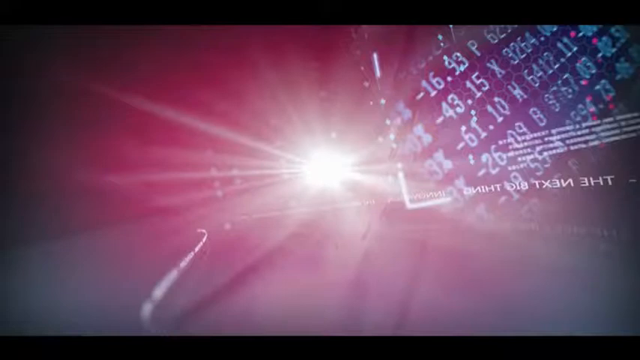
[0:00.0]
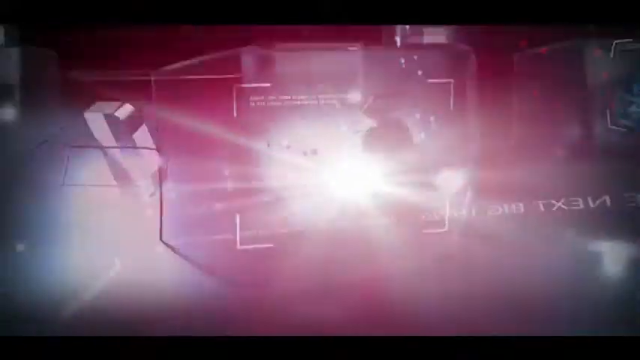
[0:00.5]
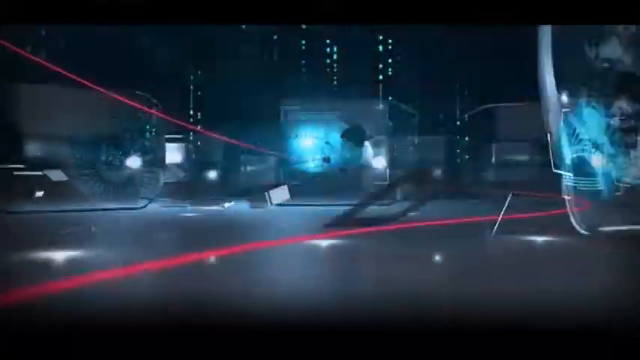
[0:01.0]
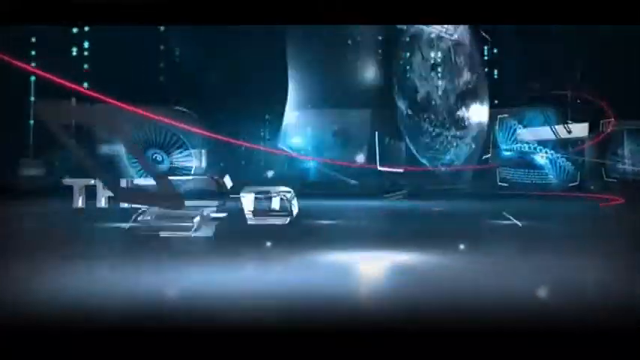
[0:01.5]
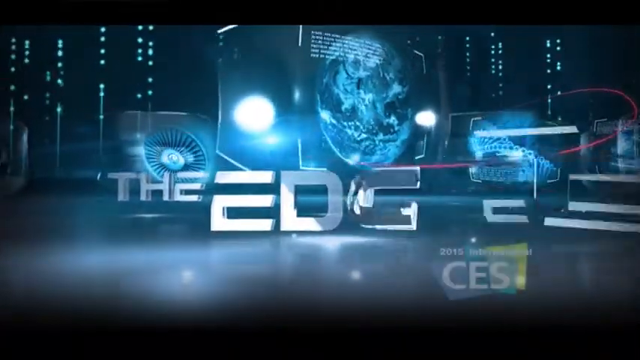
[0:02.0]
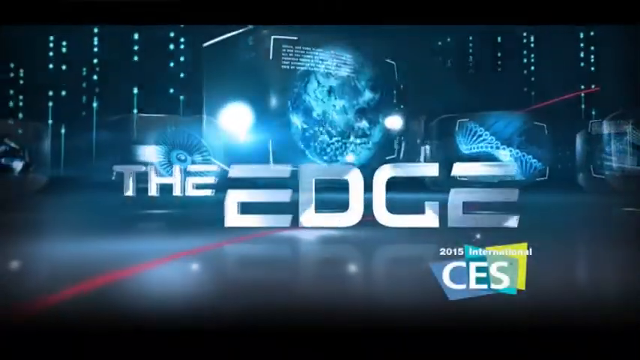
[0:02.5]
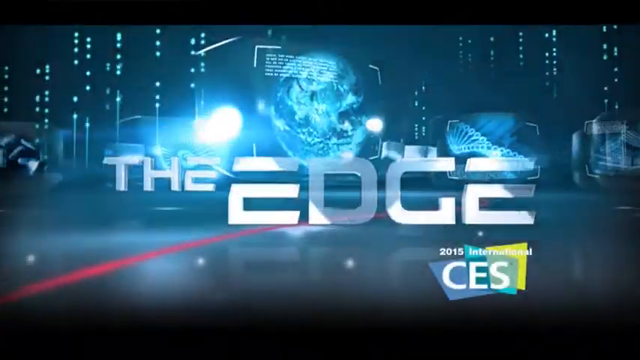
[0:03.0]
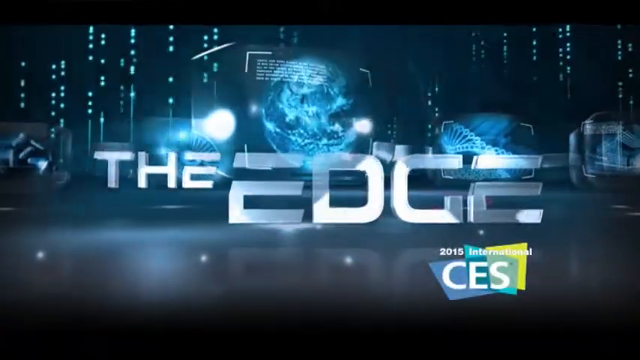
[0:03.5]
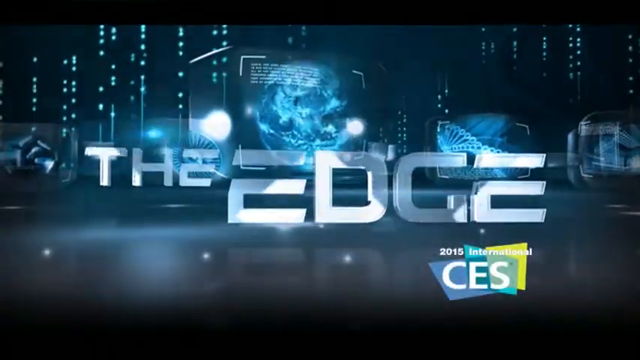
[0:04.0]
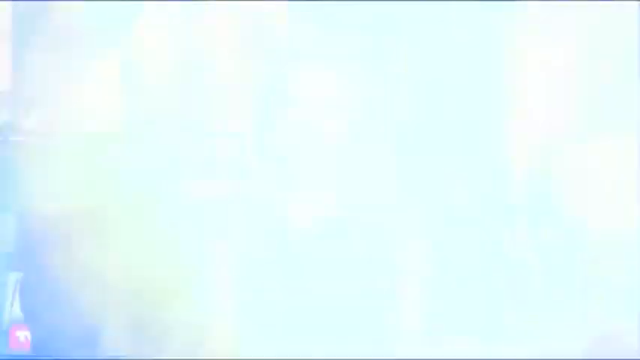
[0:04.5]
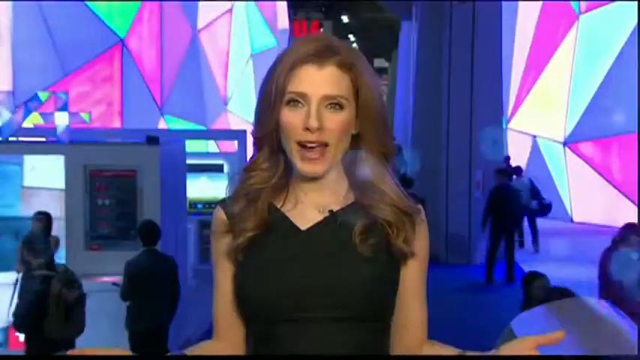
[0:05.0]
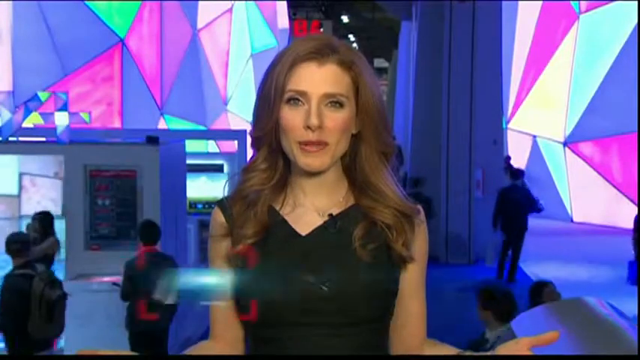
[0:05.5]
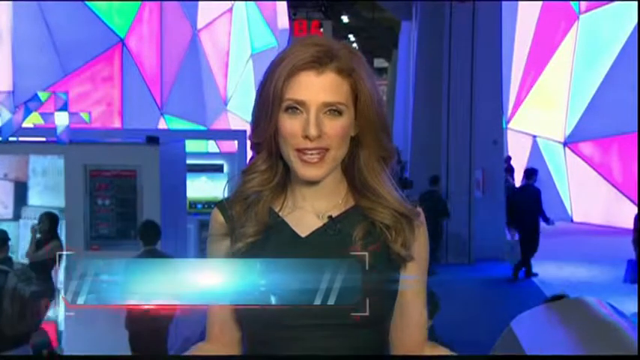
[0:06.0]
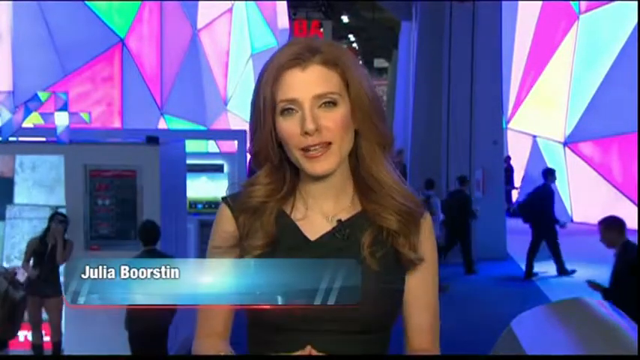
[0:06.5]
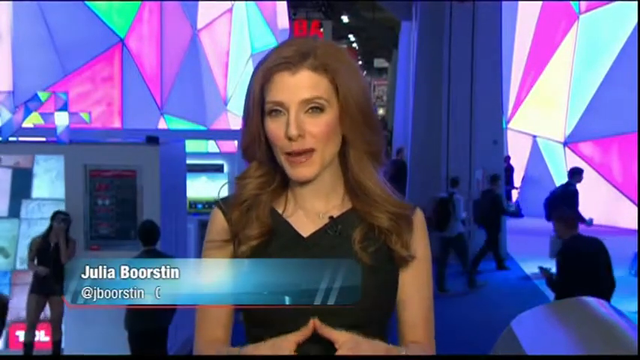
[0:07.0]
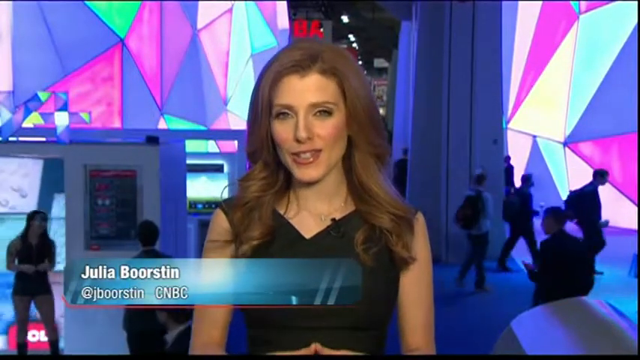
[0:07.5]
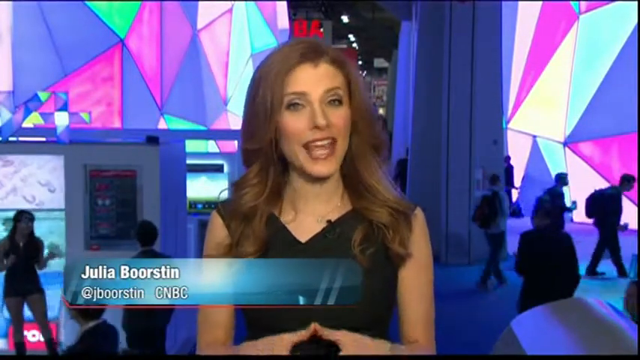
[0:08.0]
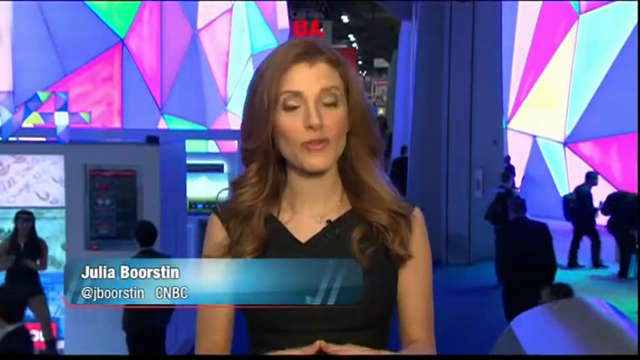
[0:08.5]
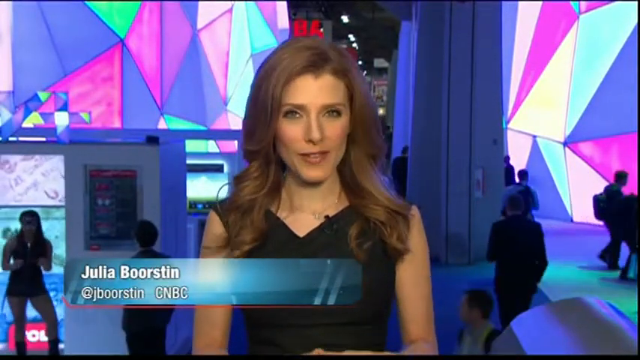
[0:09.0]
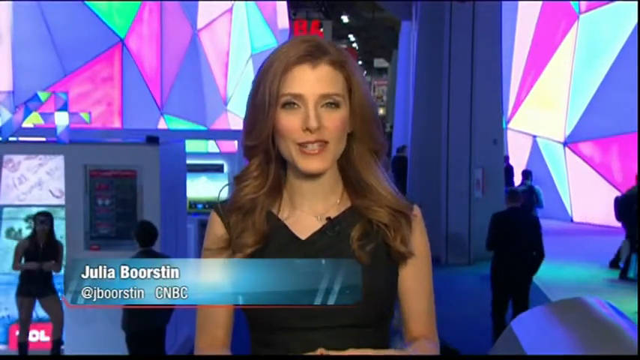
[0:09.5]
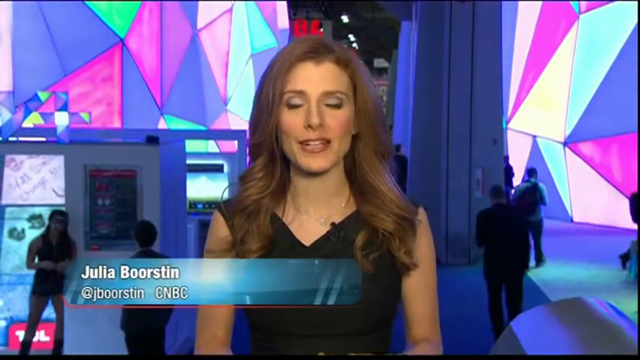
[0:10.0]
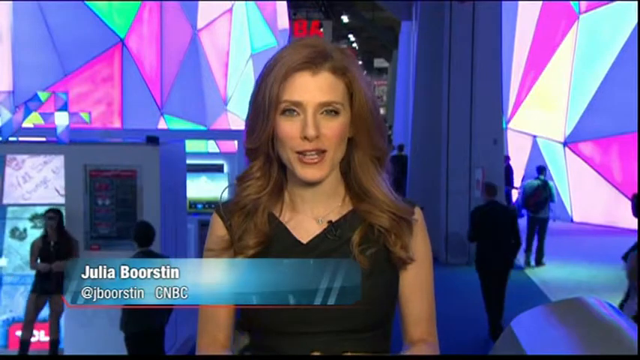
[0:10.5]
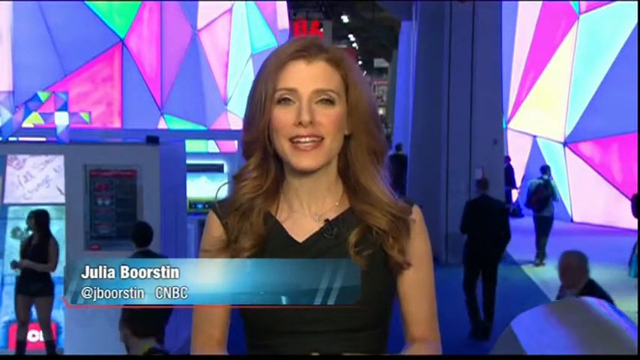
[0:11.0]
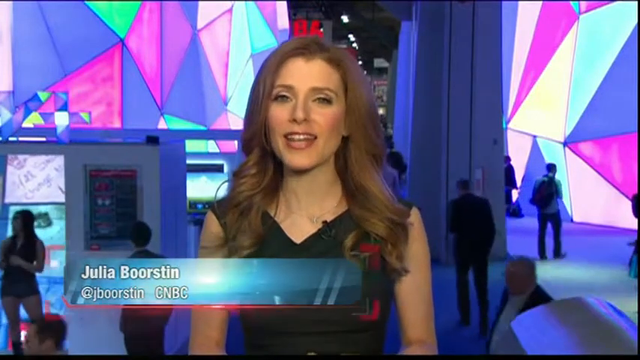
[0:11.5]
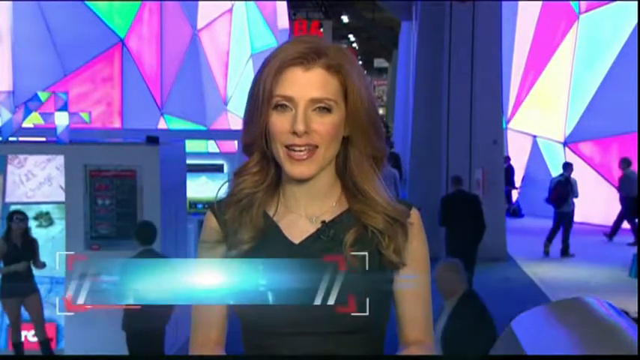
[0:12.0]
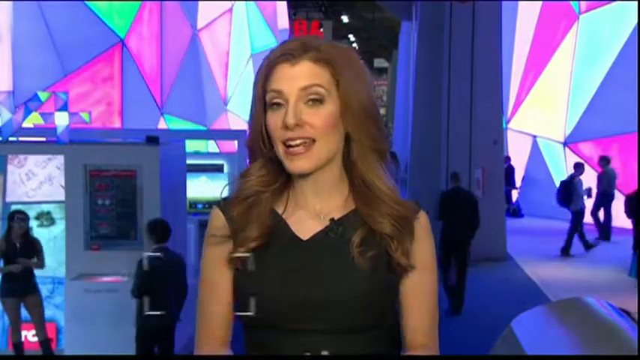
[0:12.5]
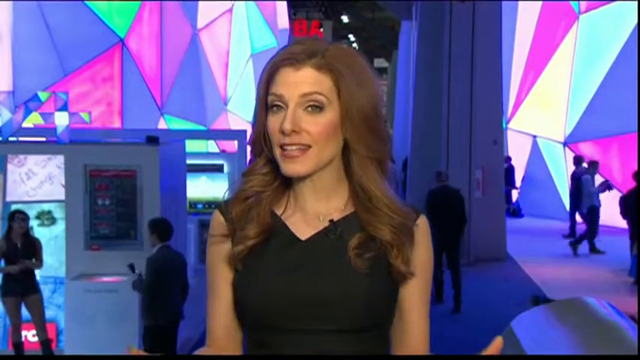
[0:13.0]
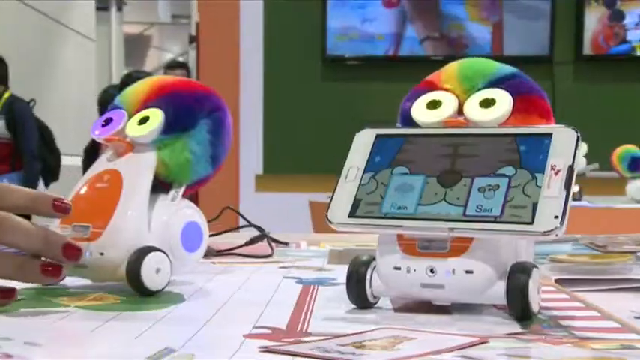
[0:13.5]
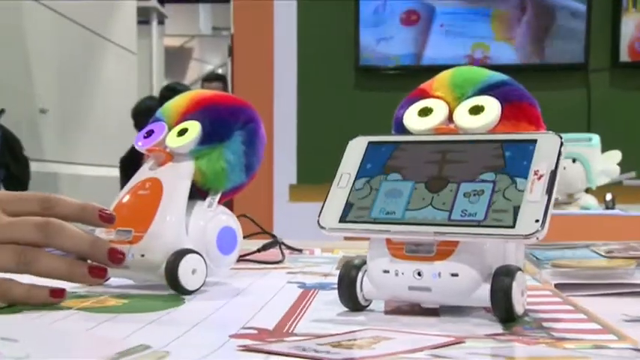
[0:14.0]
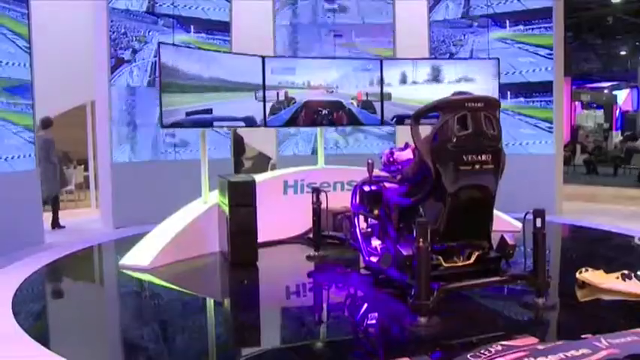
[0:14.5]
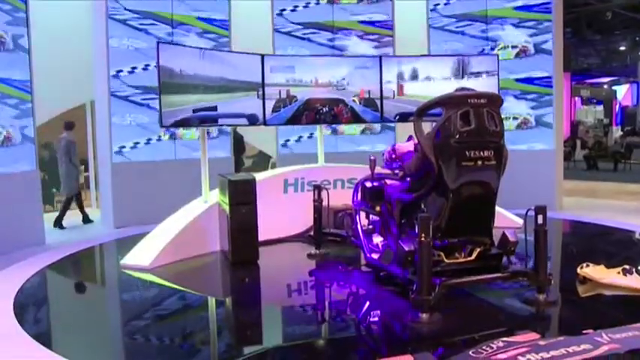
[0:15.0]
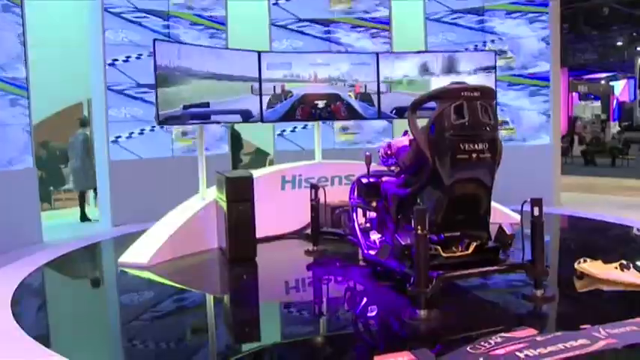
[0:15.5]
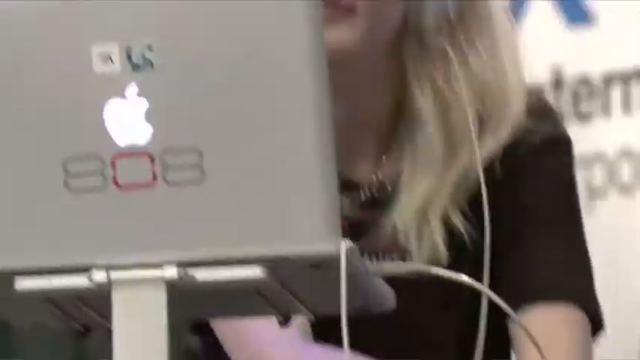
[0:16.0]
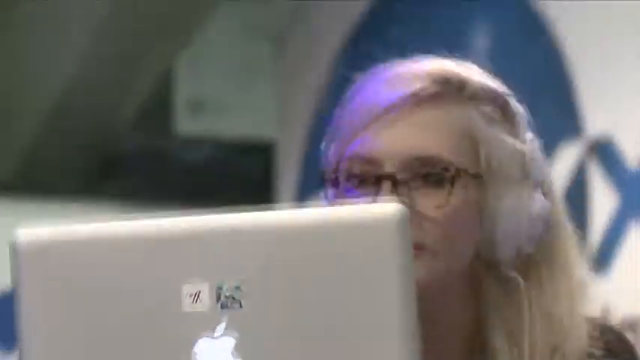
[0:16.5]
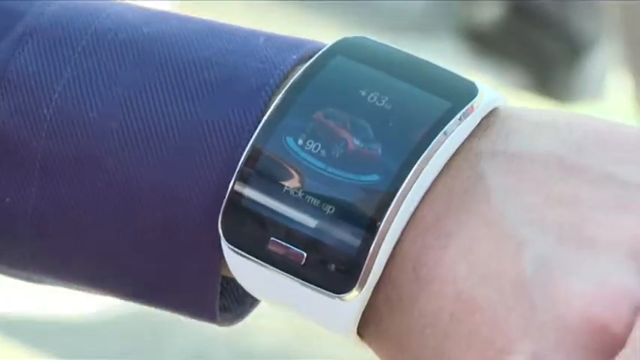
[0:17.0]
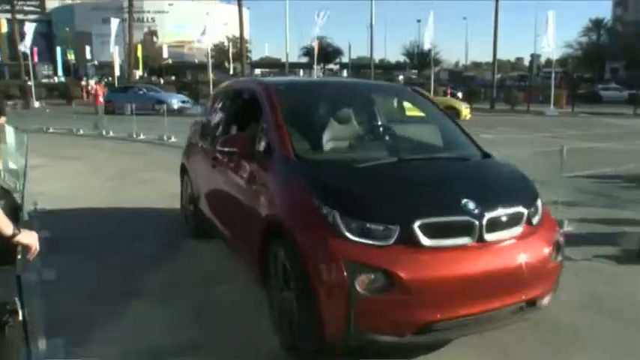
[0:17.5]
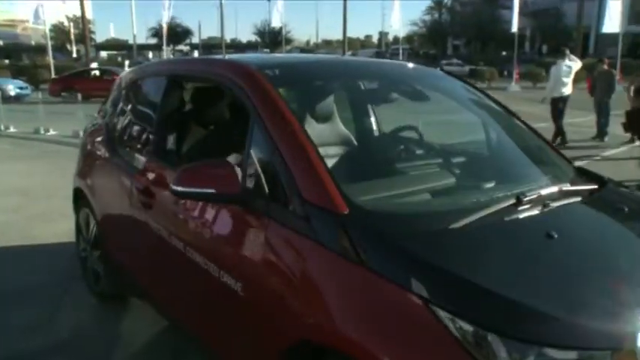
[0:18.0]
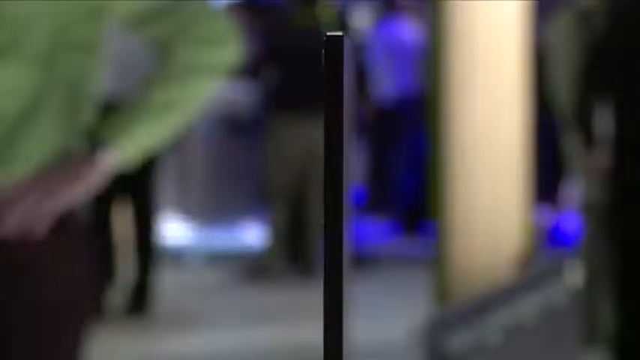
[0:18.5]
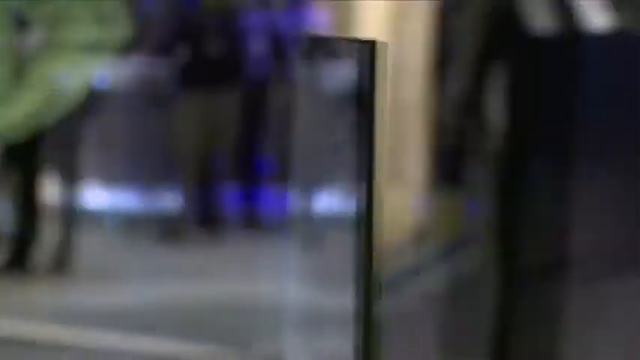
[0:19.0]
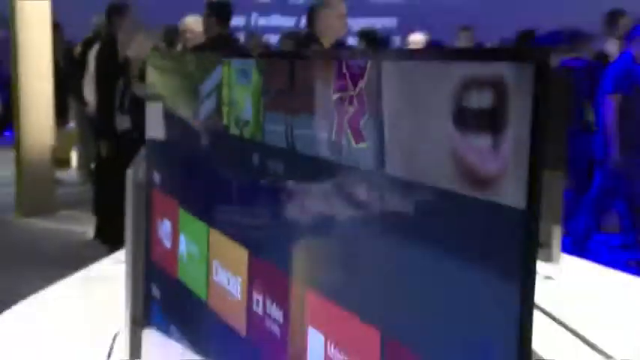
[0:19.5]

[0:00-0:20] An animation shows multiple light screens, with a bright red light coming from the center, a computer screen on the right and a number of things appearing on the sides. The view zooms out to reveal what looks like many different screens showing a TV, a globe, a fan and DNA. In the middle, the text "the Edge 2015 International CES" appears. After a flash of light, the video switches to a reporter, Julia Borstein, a CNBC reporter whose Twitter handle is J Borstin. She talks to the camera while a crowd of people walks behind her, looking at items on display; on the left is what looks like an ATM machine. Walls made of big triangles show red or black lights along with other colors such as blue and green. The video then transitions to what look like toys wearing cloud-like Afro wigs; they have big googly eyes and hold a smart screen device. Next, someone drives inside a simulator car, seemingly a sim for Formula One cars, with three monitors in front of them. A blonde-haired woman then jumps up and down while looking at a computer screen. A close-up of someone's watch, which seems to be connected to their car, shows it set to "pick me up," and then the car rolls up. The video then shows a different TV screen, possibly an OLED or some new screen material, or maybe a smart TV.